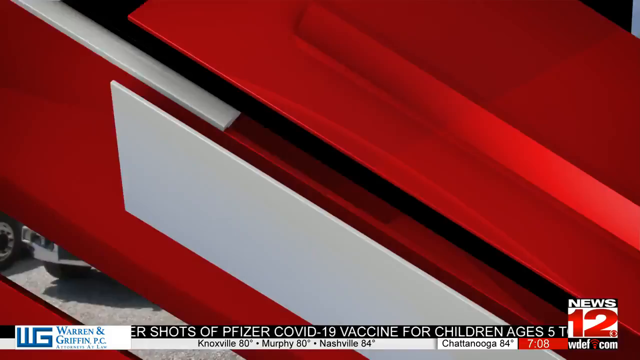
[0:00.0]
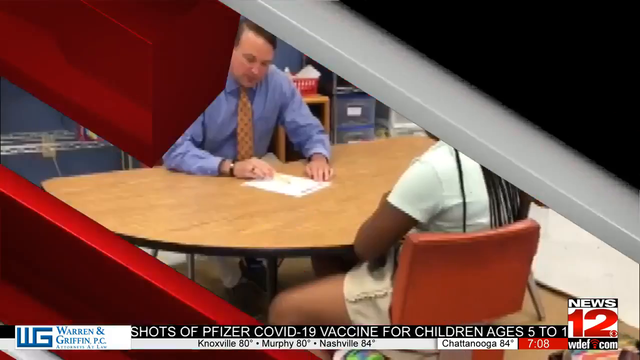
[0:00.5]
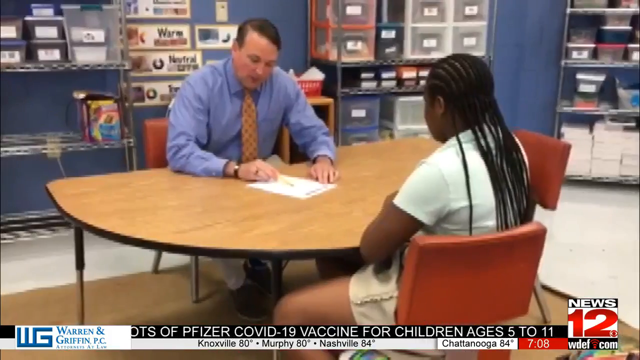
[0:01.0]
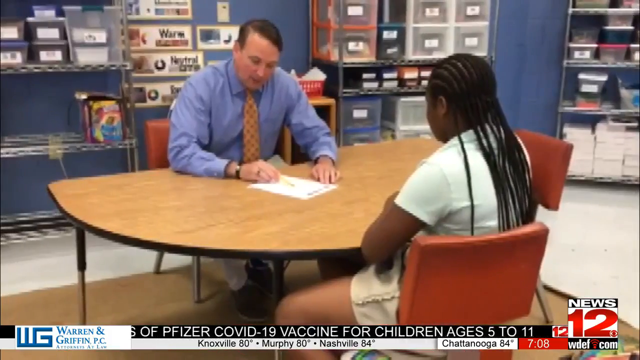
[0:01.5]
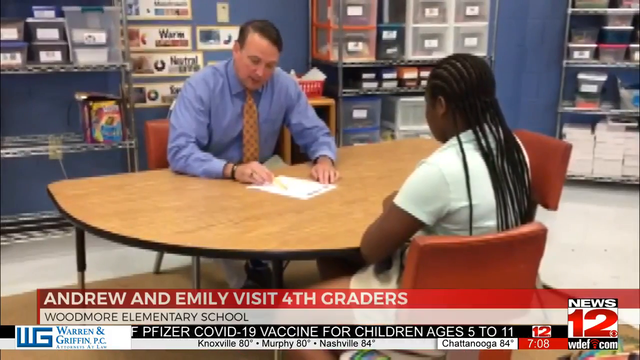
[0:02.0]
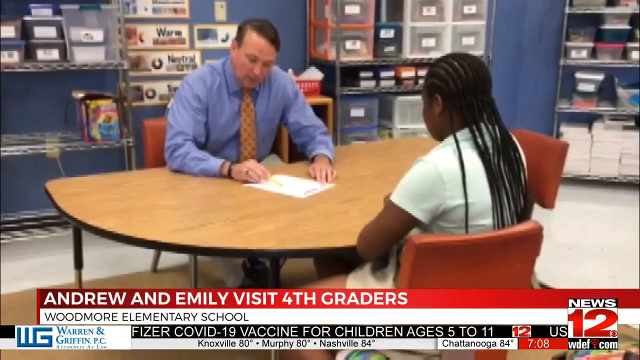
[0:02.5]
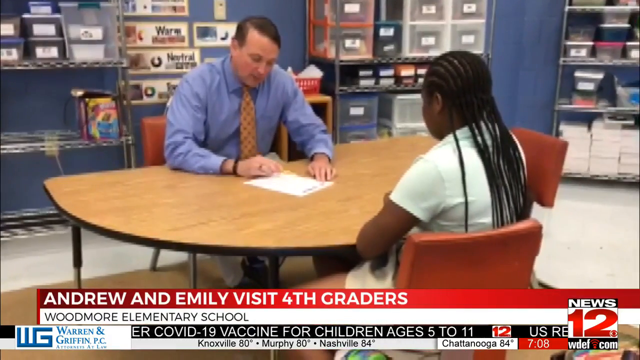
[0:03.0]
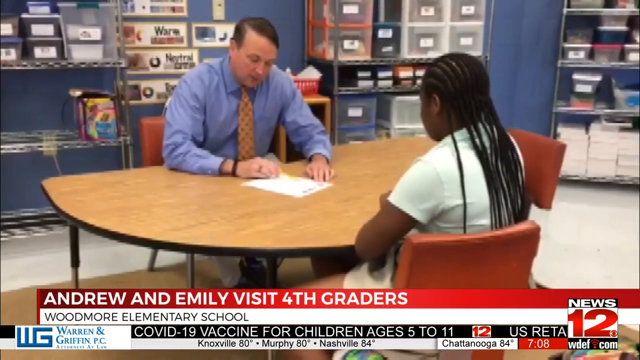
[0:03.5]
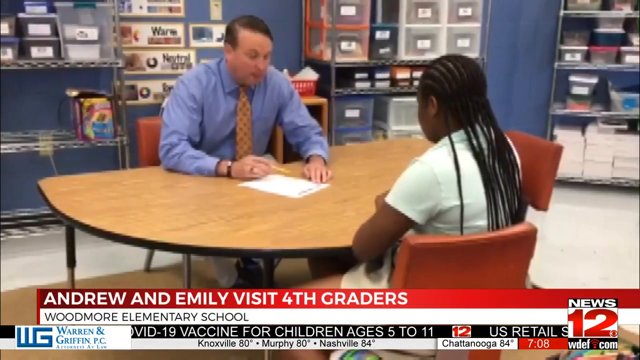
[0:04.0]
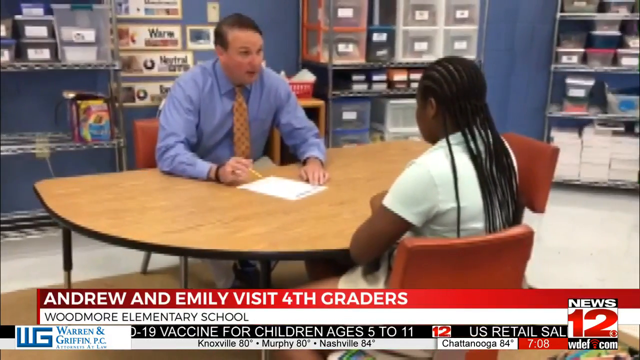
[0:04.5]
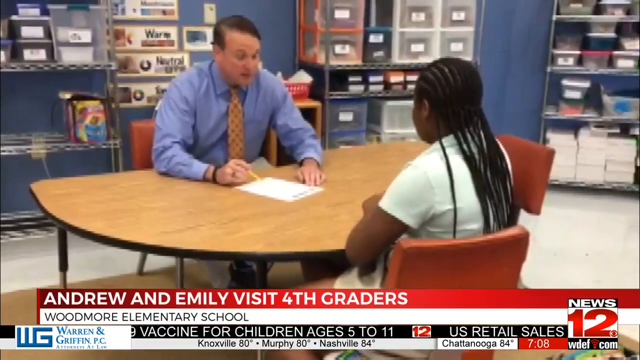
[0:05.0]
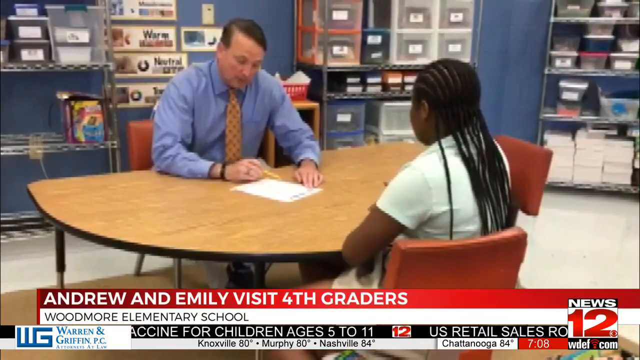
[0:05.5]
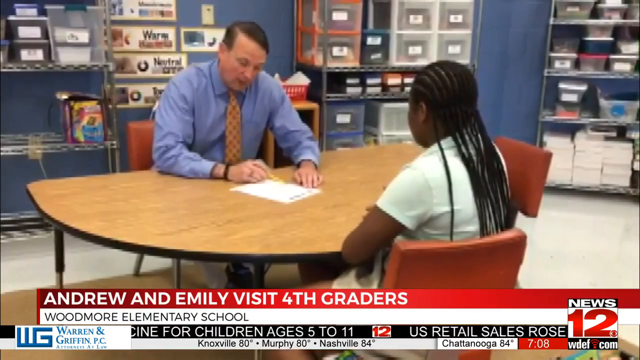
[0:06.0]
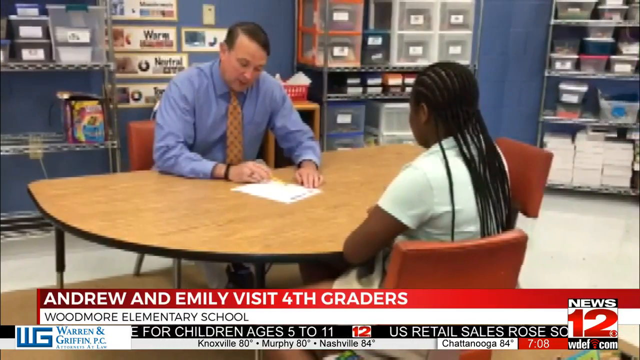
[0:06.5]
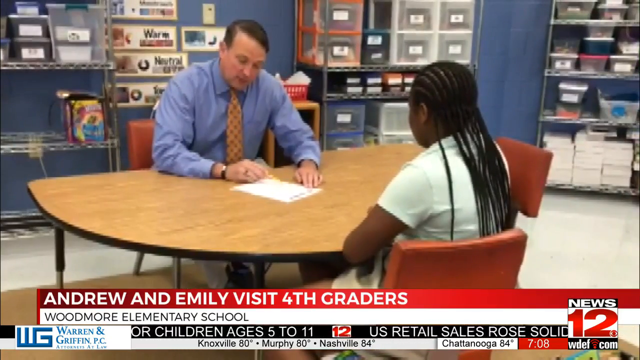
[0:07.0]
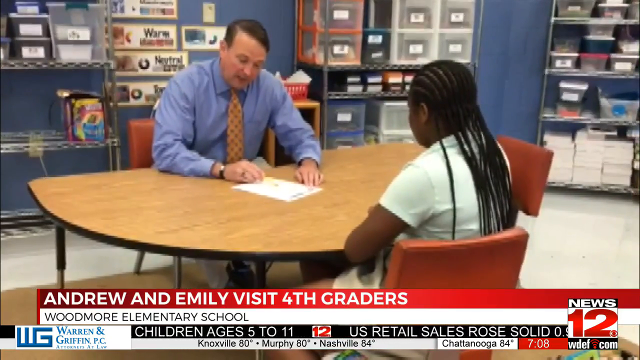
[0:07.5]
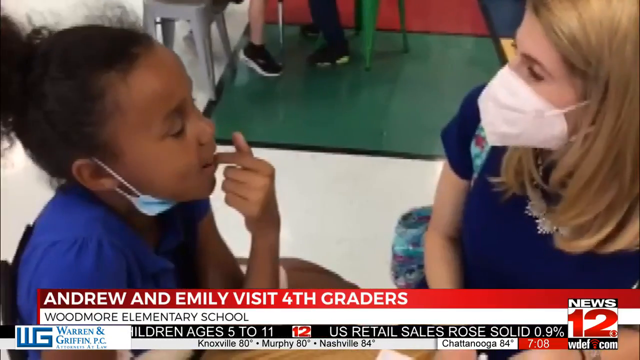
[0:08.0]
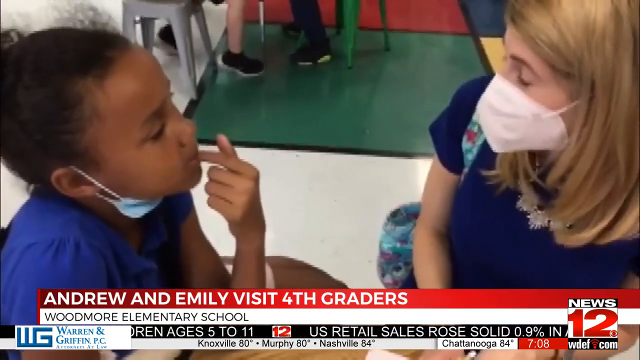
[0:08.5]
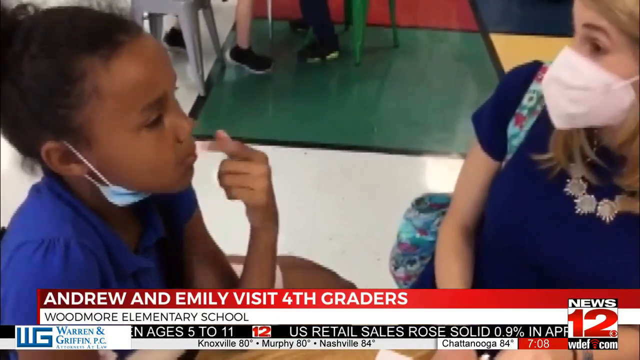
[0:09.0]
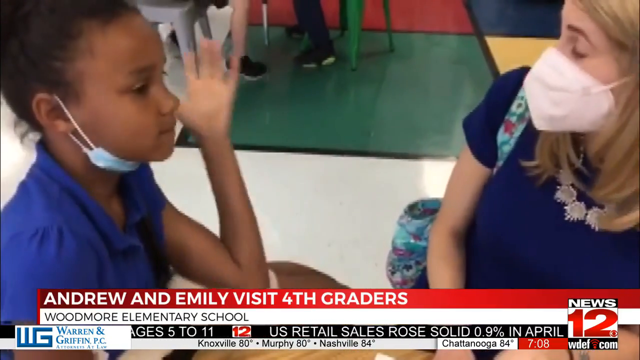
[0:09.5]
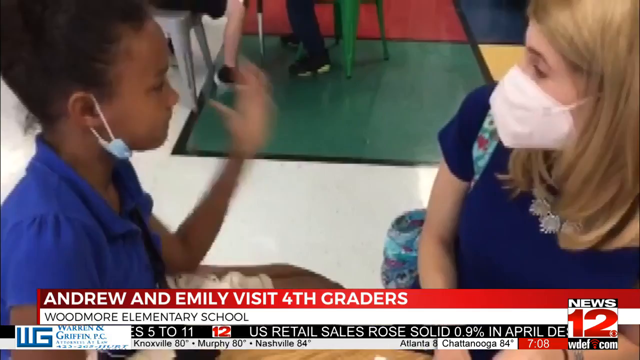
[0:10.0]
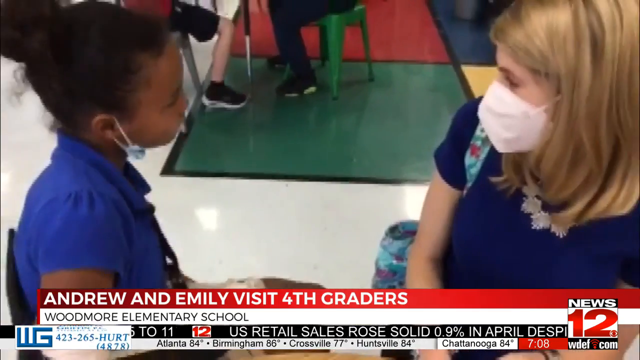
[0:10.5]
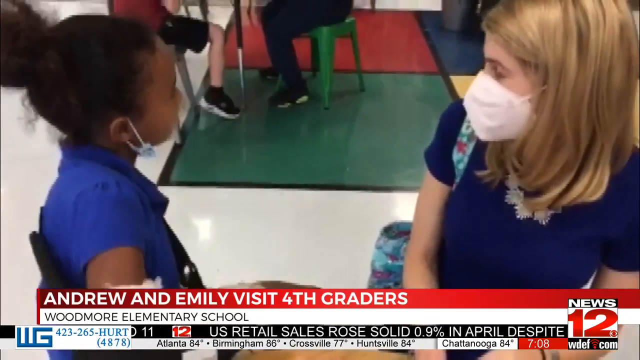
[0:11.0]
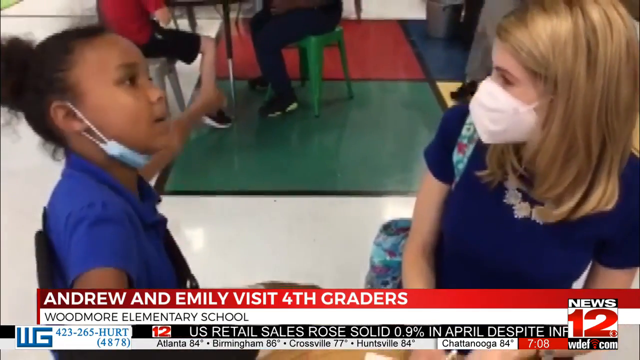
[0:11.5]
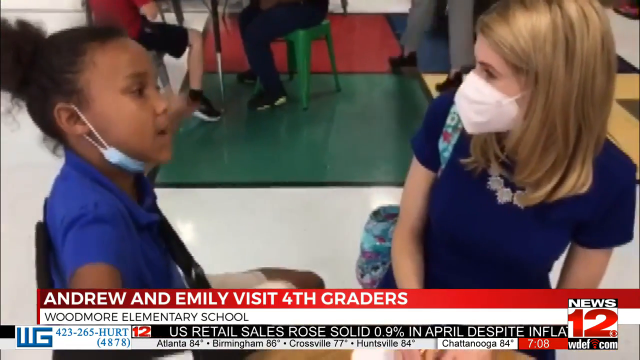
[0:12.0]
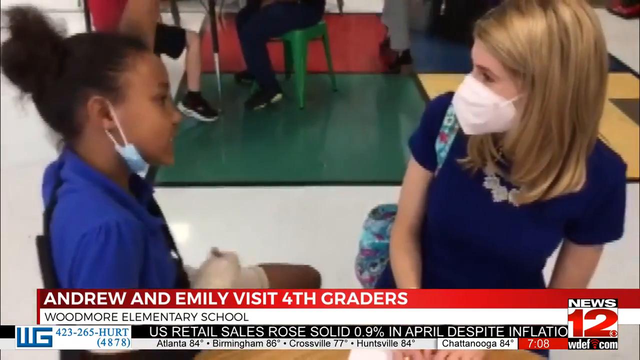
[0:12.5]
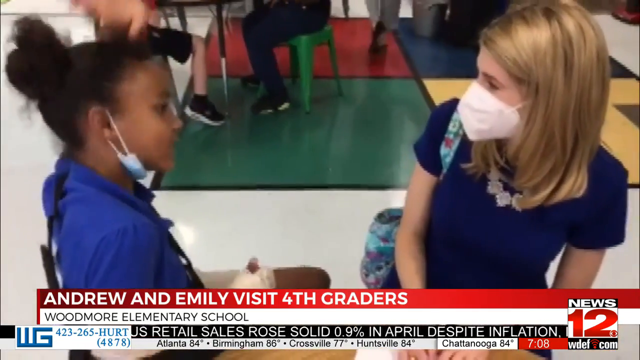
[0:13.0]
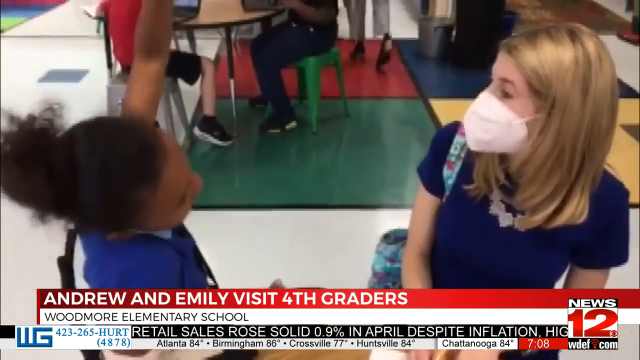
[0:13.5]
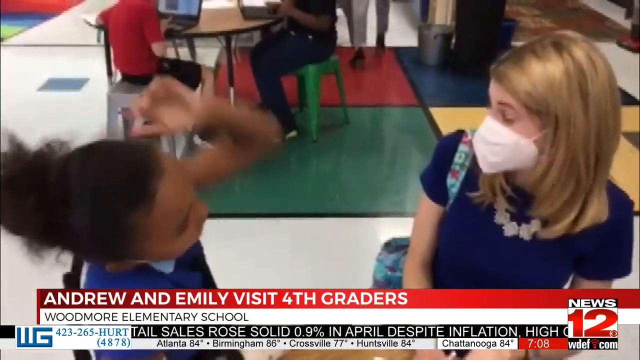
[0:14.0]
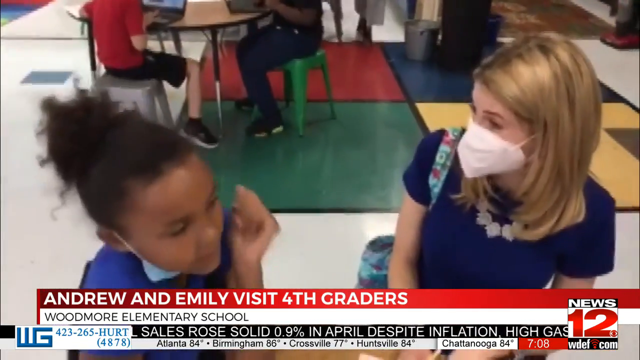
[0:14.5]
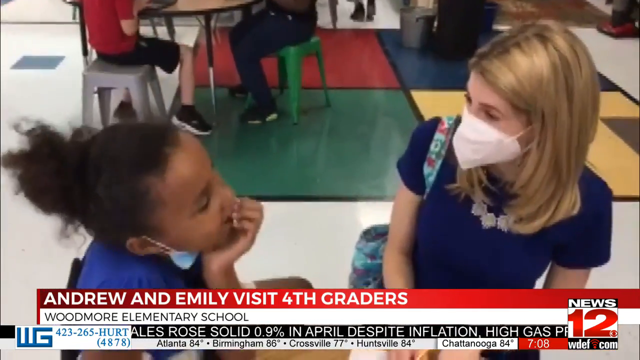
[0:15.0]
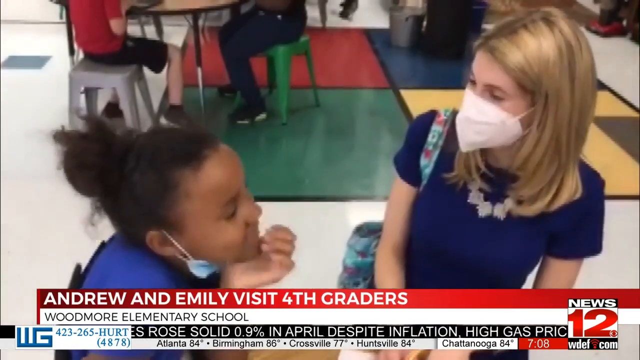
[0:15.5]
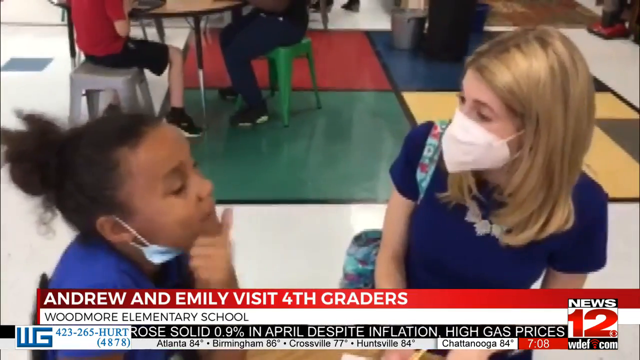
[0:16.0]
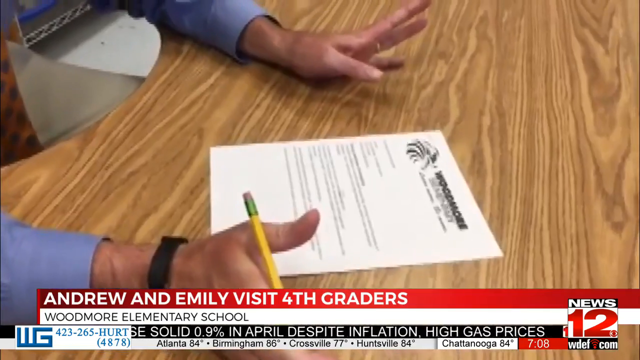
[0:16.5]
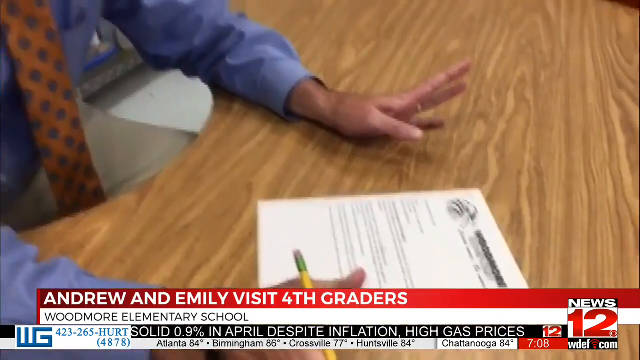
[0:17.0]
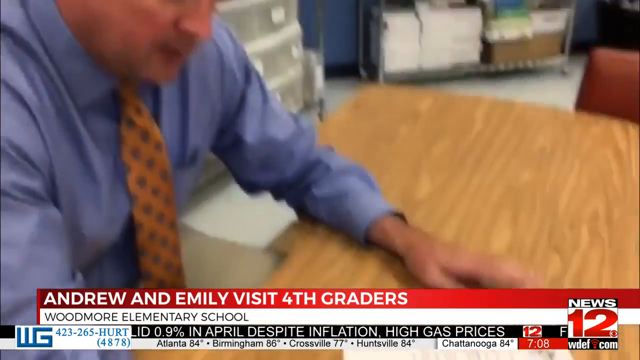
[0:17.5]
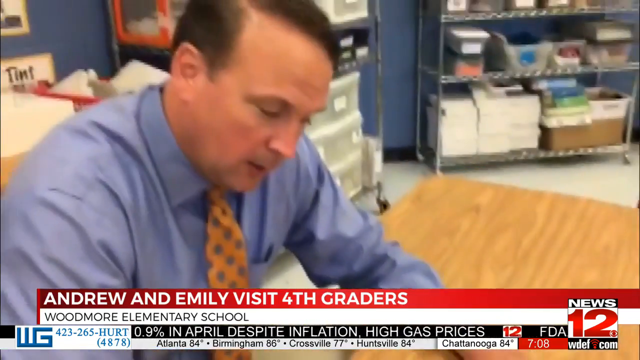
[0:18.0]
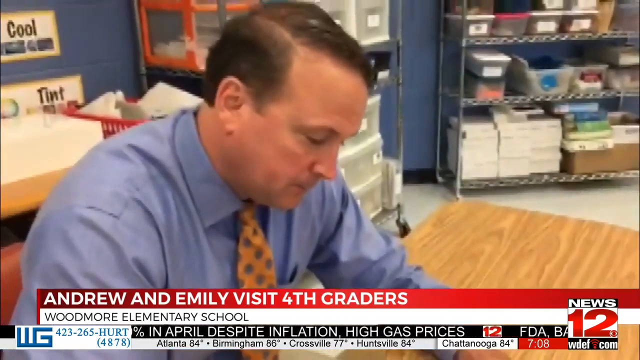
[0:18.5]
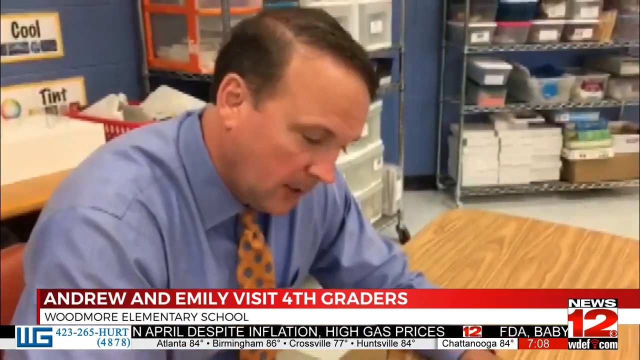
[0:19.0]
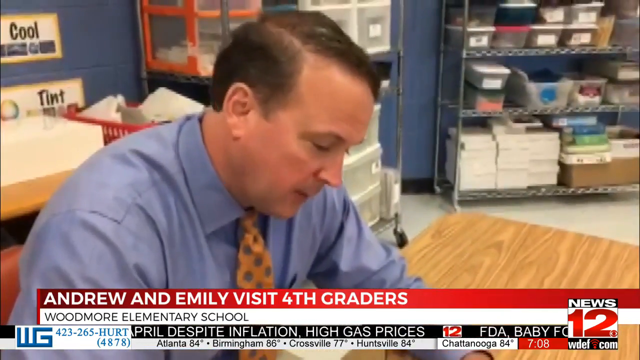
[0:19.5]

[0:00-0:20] The video begins with a segment from a news program. A red transition sequence appears to show an individual speaking with a child. Underneath, text reads "Andrew and Emily visit fourth graders," and the location appears to be Woodmore Elementary School. At the bottom right, text states "Channel 12 News." Another transition leads to a few seconds of footage of a woman on the right wearing a mask, speaking with a child on the left who has her mask down; she animates her speech, moving her hands left and right, and is laughing and happy. Another transition returns to the same gentleman seated in front of the table, wearing a dress shirt and tie, going over information with a pencil and paper. Several adults and children are present but out of focus.